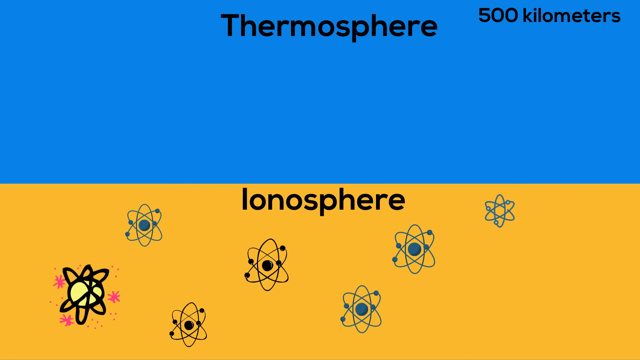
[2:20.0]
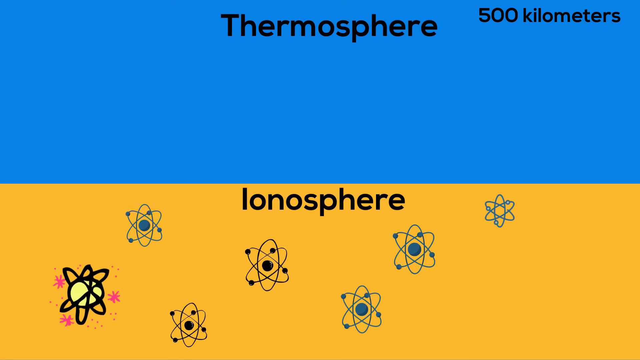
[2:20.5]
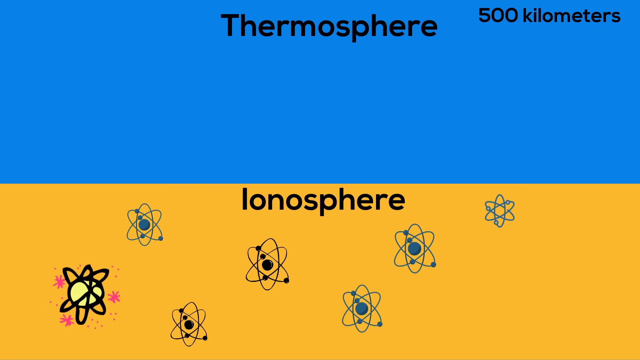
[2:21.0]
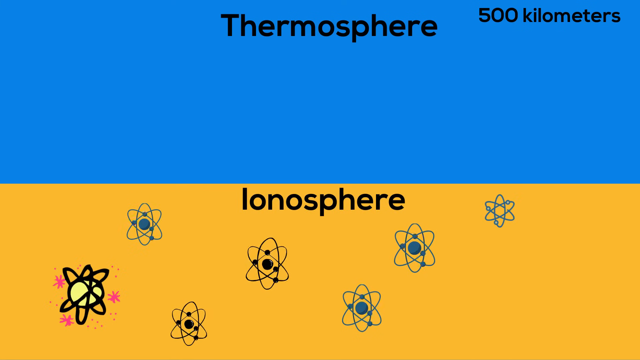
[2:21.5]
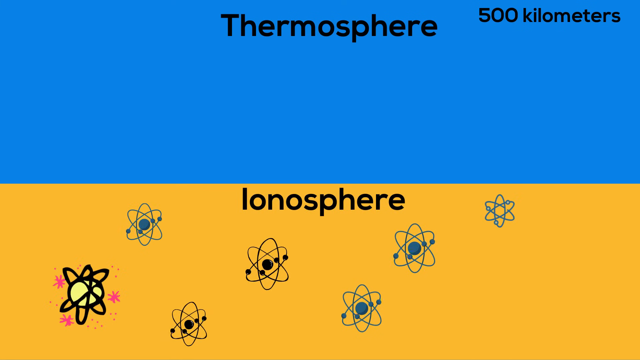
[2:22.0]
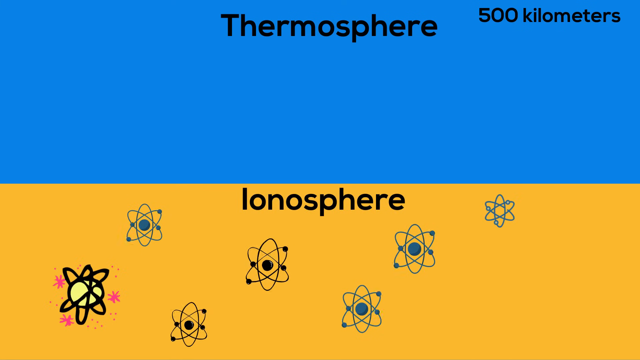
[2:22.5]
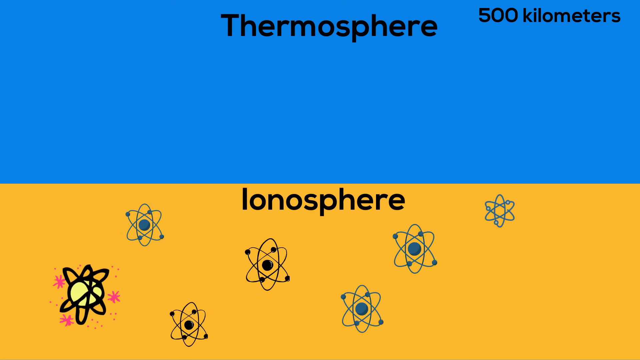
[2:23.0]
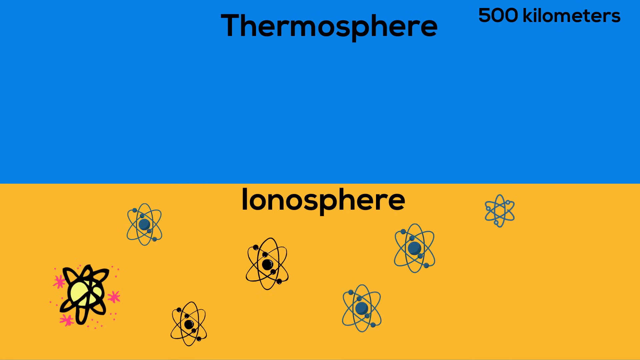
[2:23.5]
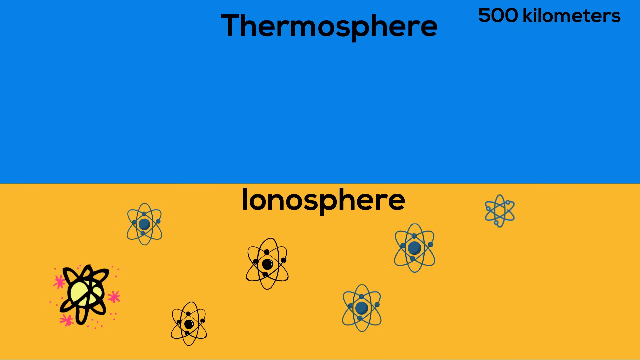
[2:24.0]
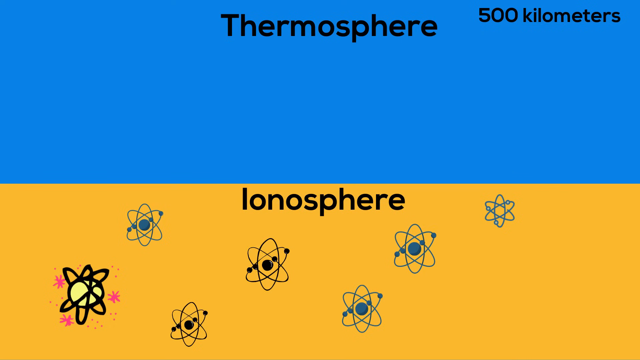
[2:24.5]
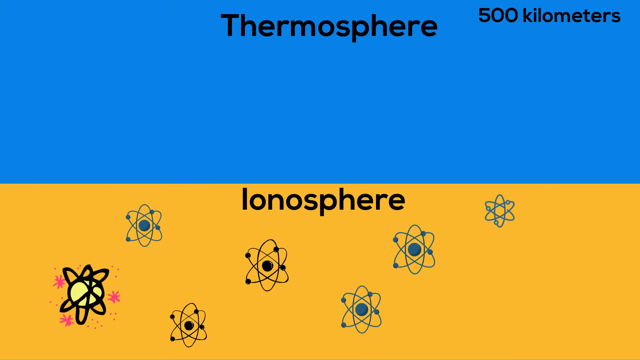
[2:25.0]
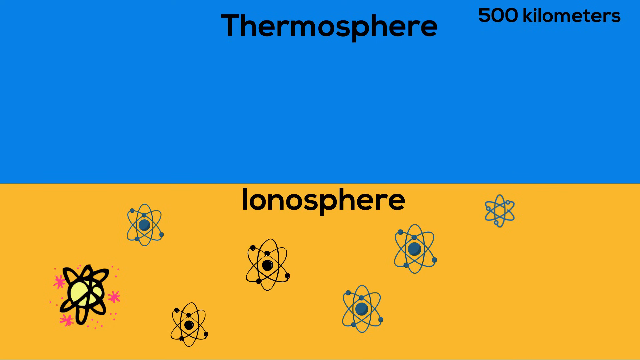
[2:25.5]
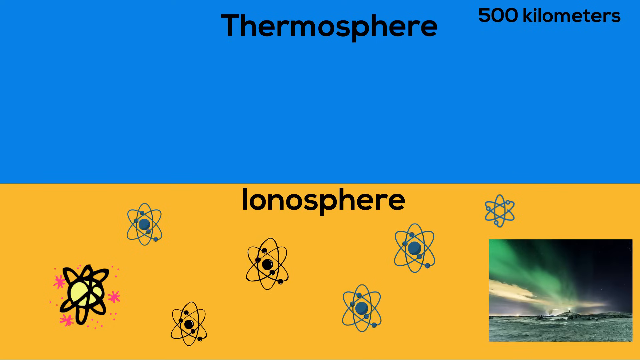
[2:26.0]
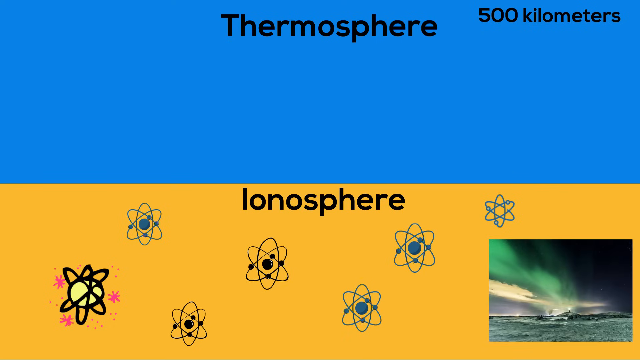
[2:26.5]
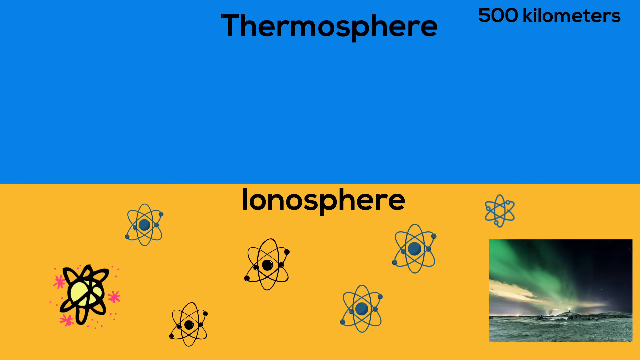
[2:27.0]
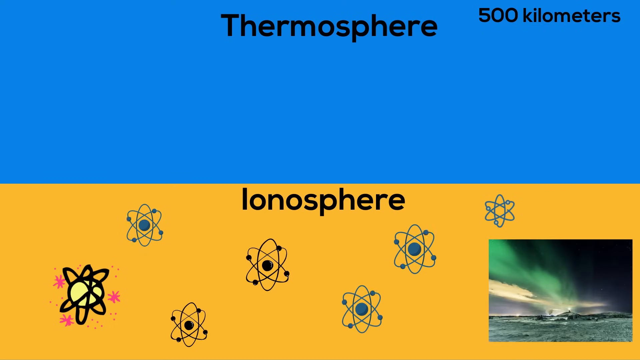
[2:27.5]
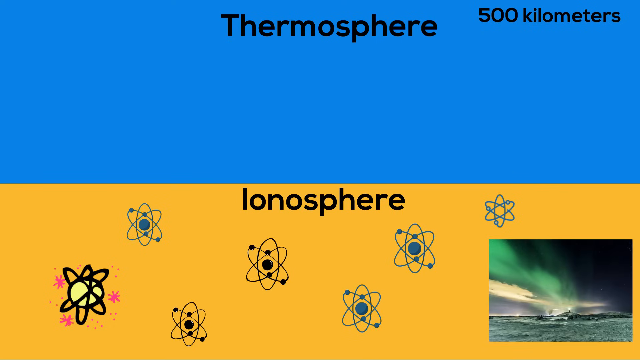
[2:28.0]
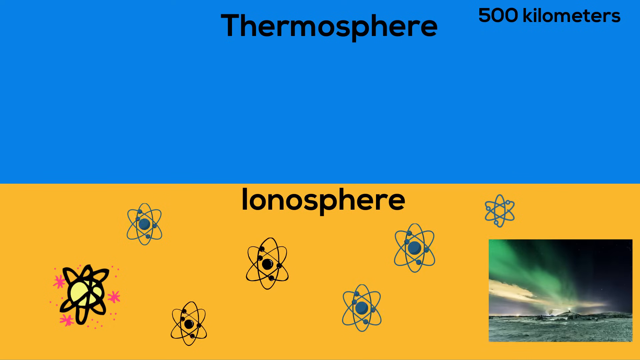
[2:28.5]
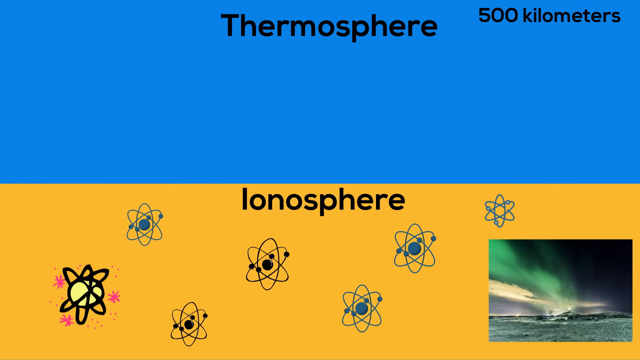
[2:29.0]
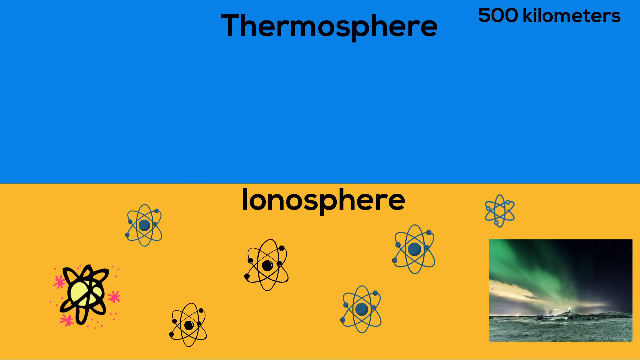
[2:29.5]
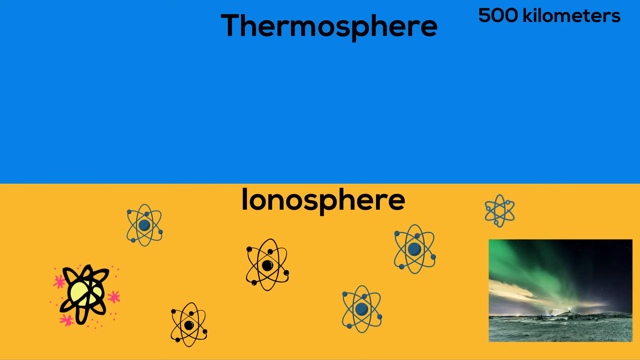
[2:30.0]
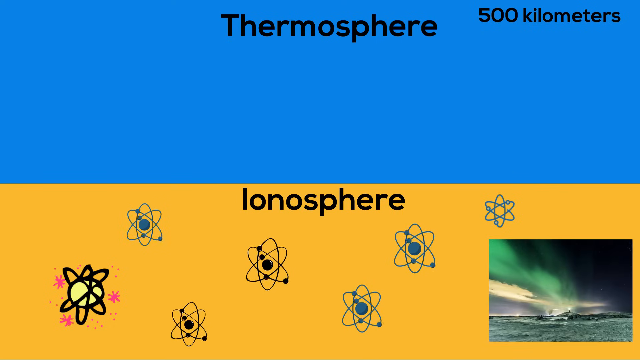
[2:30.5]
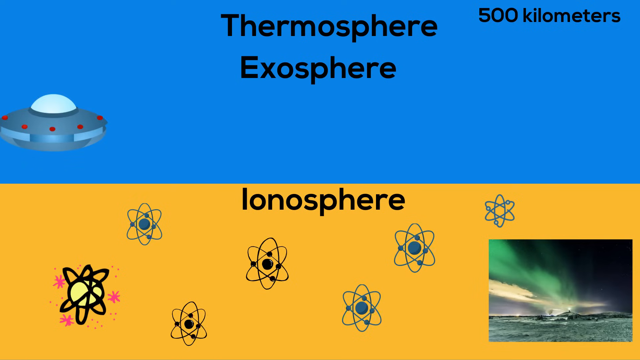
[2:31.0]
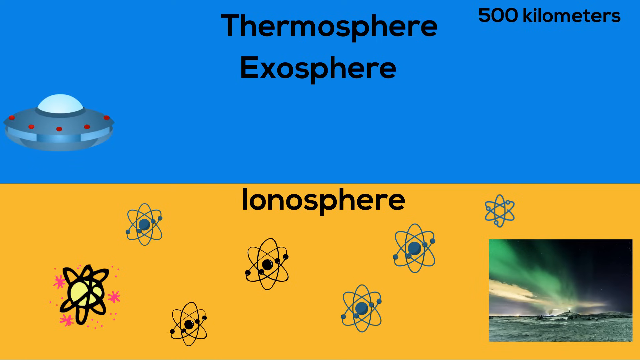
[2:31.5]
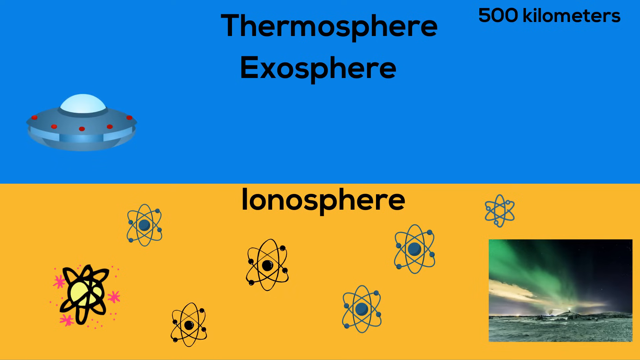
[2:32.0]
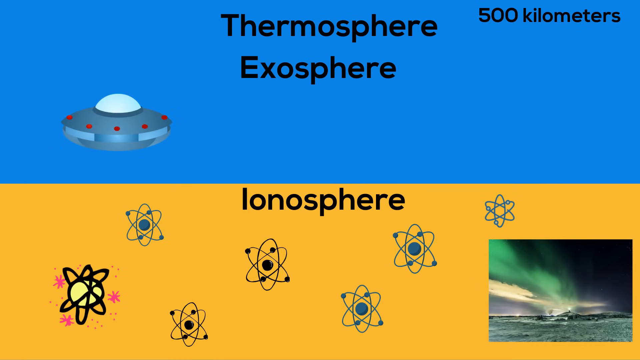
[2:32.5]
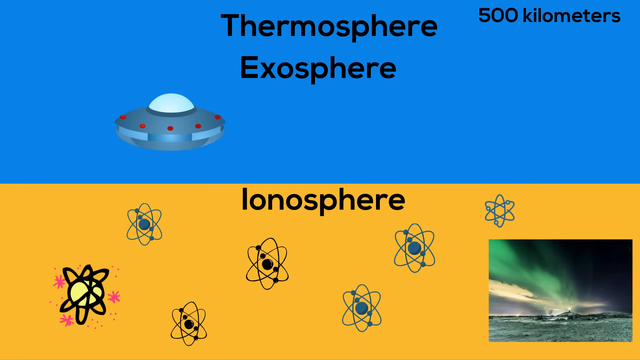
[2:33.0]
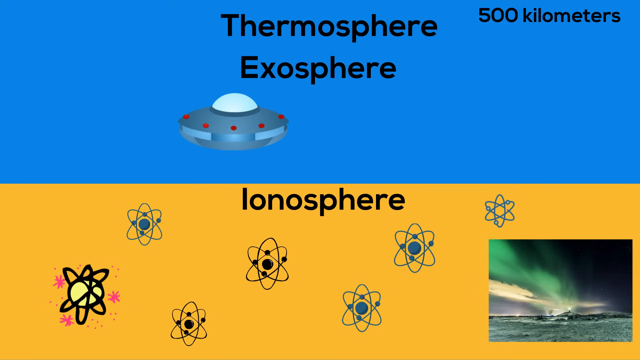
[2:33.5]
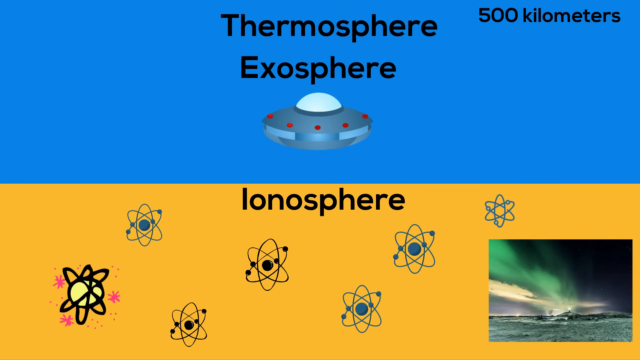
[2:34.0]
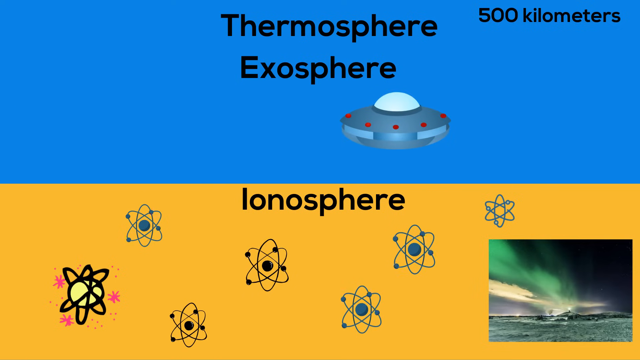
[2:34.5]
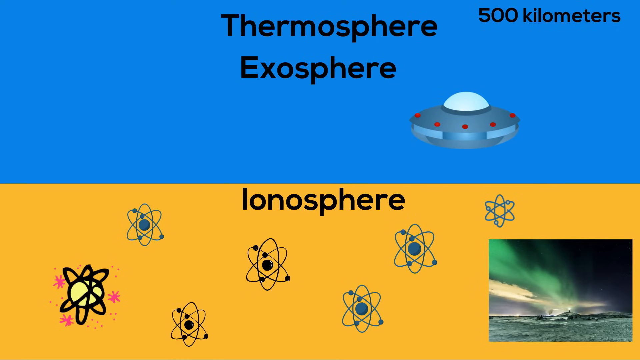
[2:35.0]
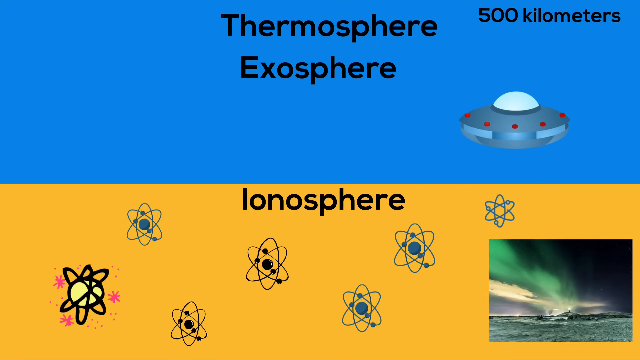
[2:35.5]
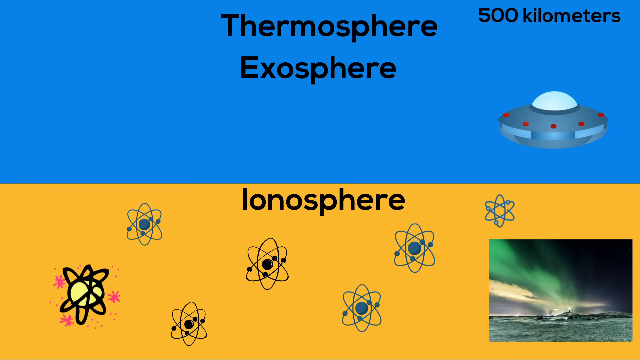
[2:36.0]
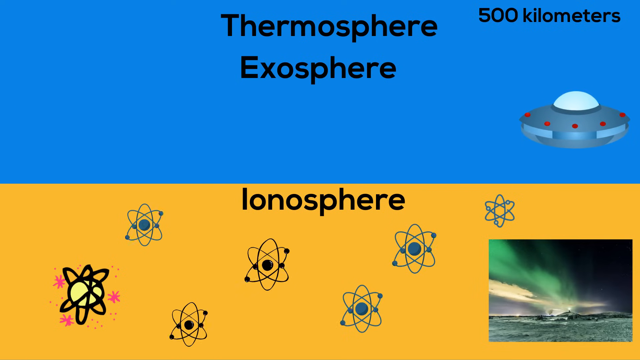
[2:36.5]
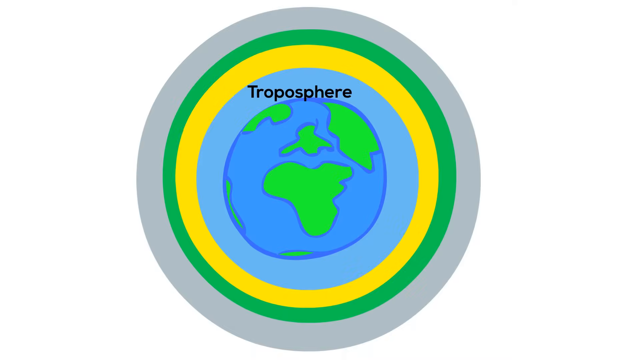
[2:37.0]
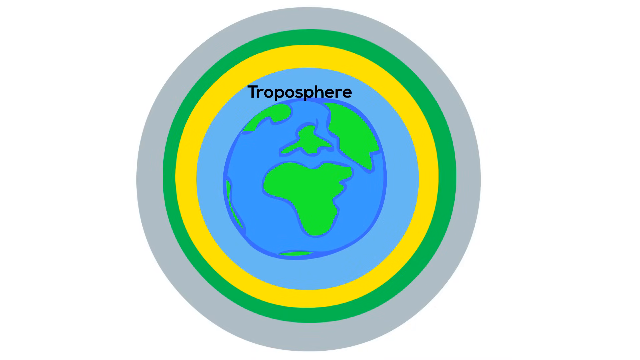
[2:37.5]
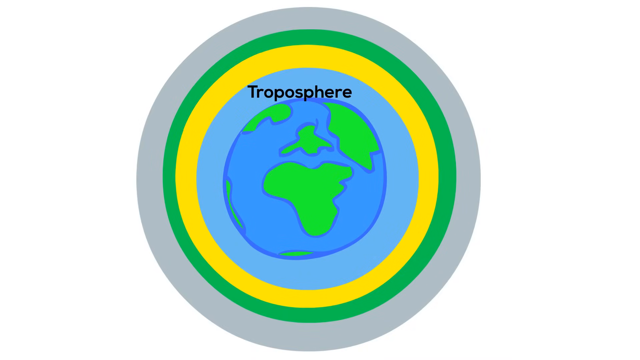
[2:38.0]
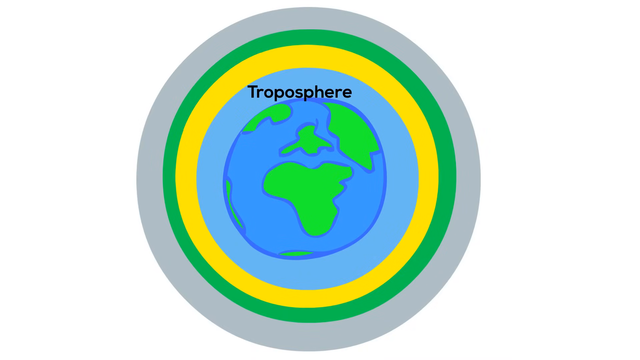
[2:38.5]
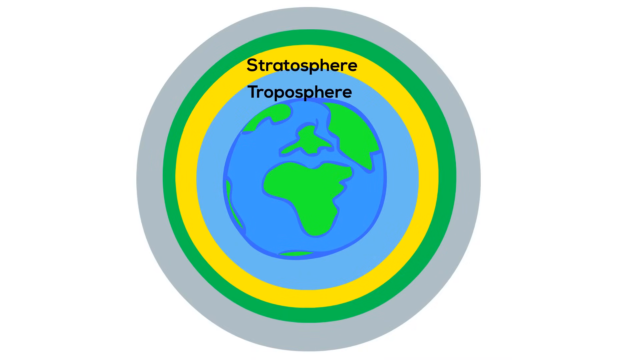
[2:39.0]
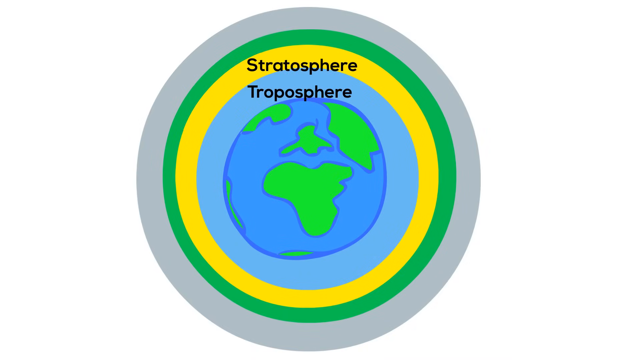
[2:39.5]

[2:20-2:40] The bottom three layers below the thermosphere have been replaced by the ionosphere. In it, apparently ions float all over the place; most look almost like Jimmy Neutron-type logos, circling around each other in an oval shape or around a center sphere. One at the top right is static, with no circle in the middle, and one at the bottom left has a clipart look and is not animated. Right below the thermosphere, the exosphere is labeled, and a spaceship flies from left to right. At the bottom right of the ionosphere is a picture apparently showing neon lights.